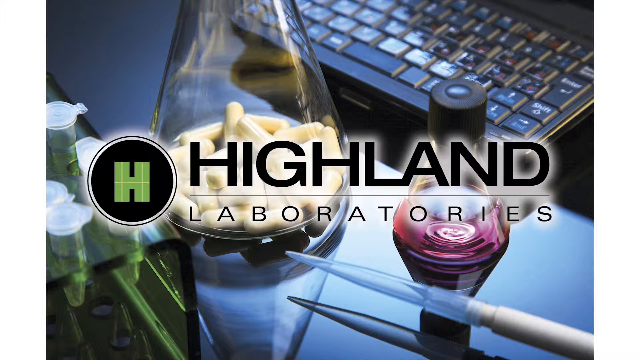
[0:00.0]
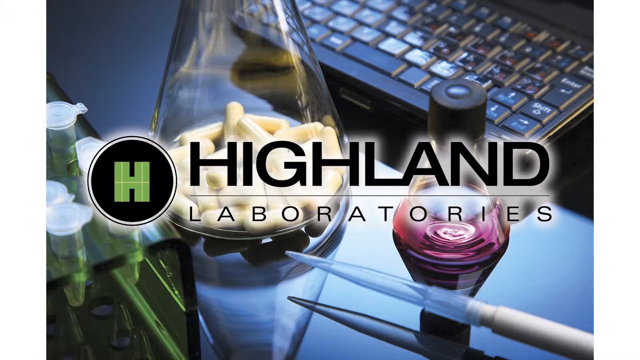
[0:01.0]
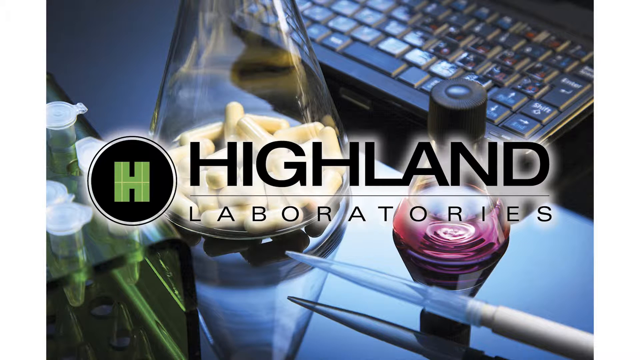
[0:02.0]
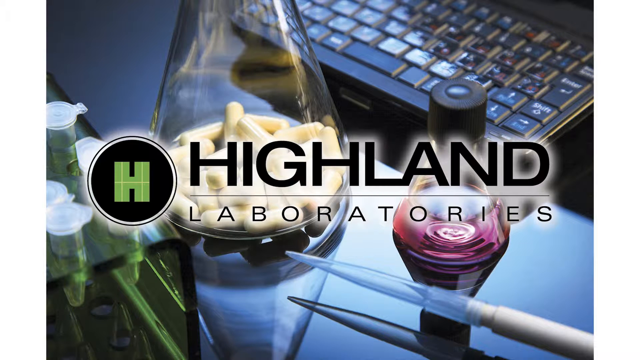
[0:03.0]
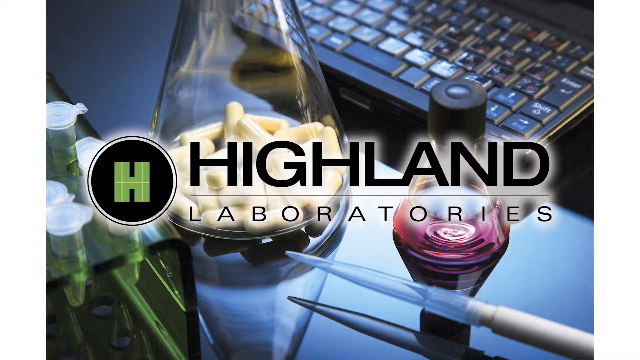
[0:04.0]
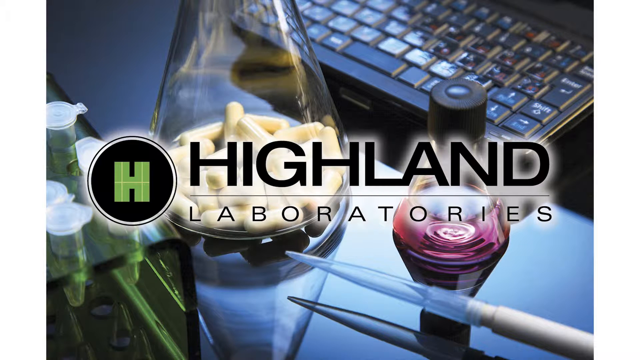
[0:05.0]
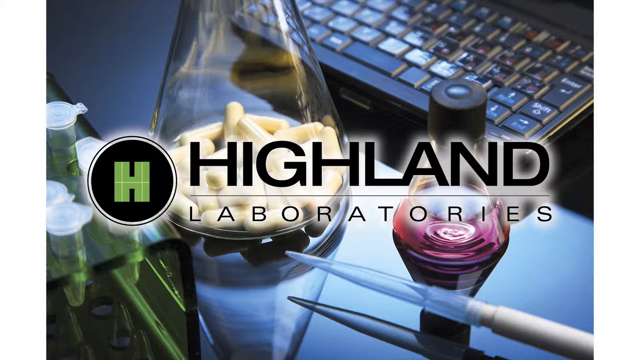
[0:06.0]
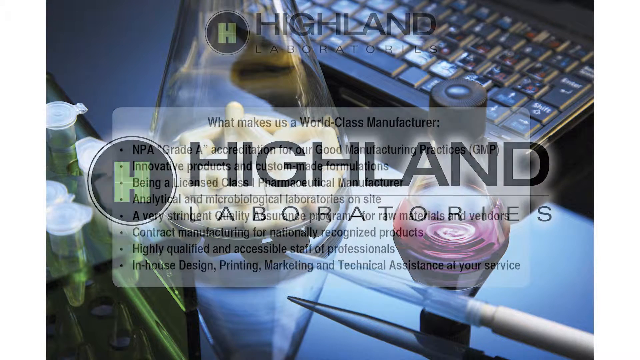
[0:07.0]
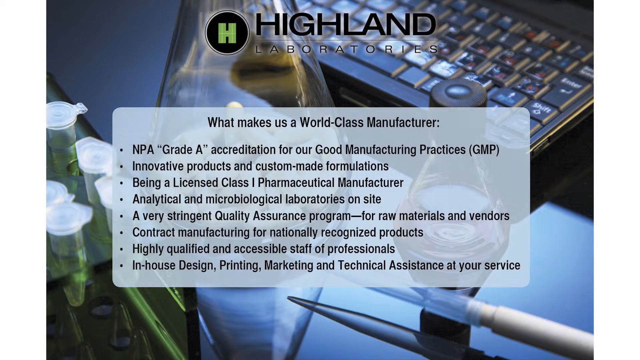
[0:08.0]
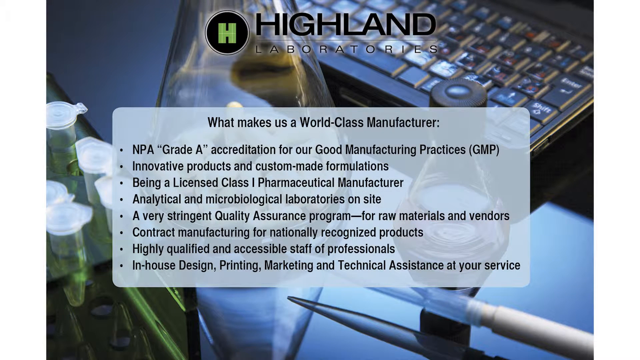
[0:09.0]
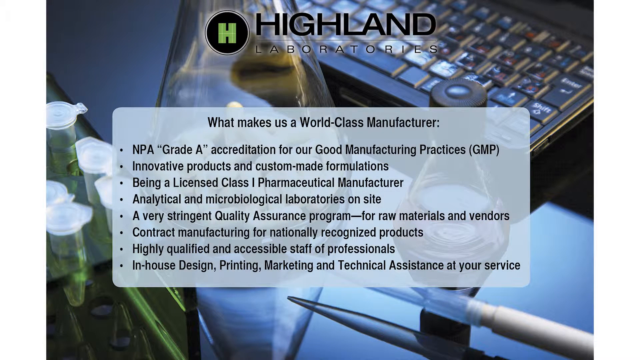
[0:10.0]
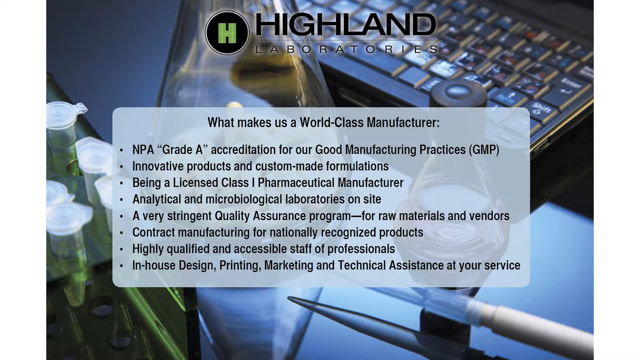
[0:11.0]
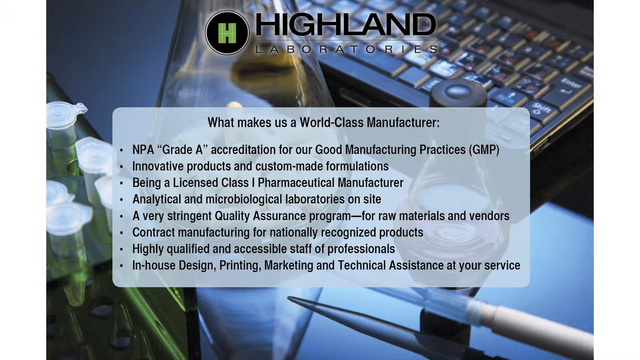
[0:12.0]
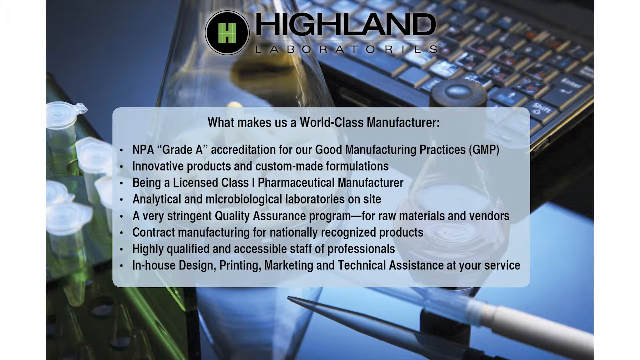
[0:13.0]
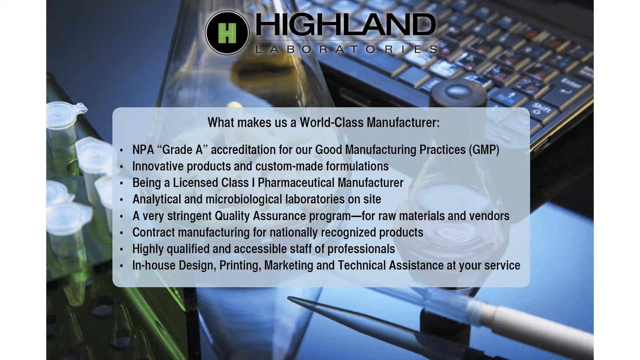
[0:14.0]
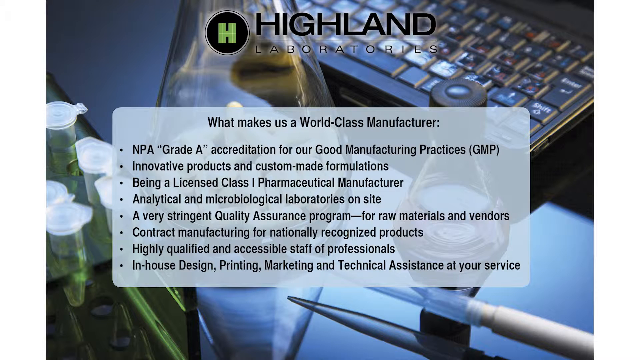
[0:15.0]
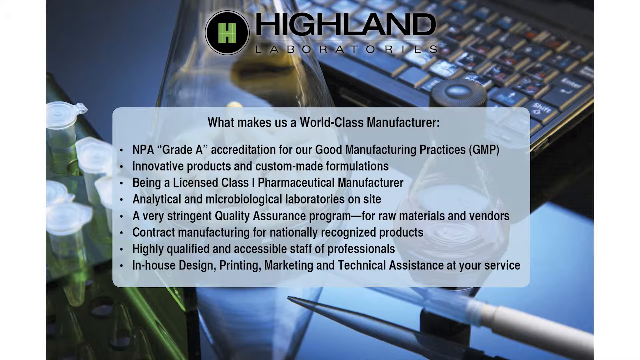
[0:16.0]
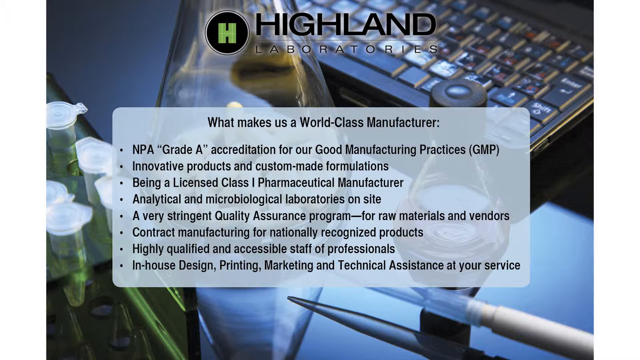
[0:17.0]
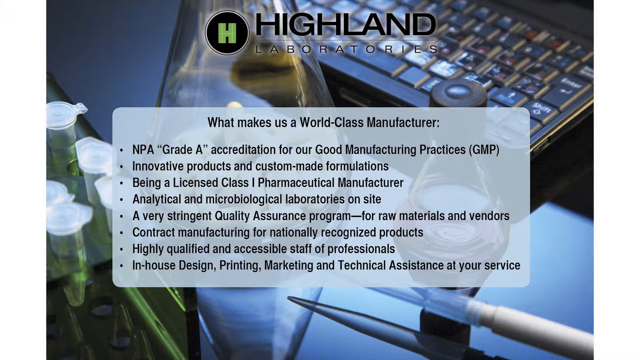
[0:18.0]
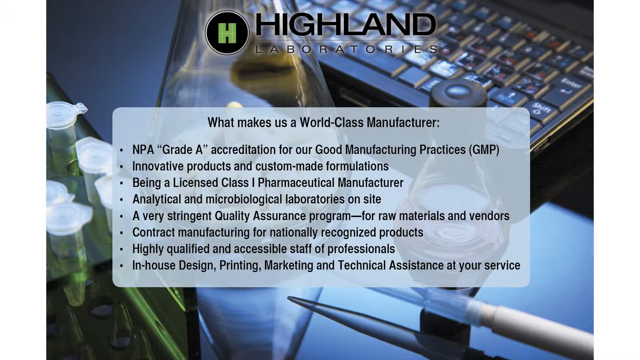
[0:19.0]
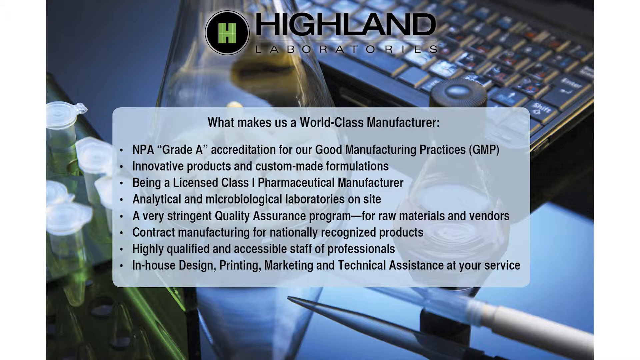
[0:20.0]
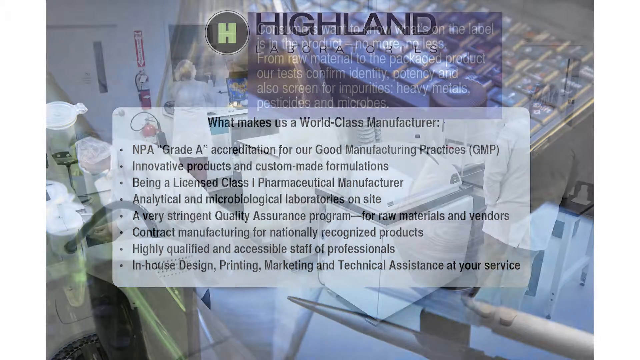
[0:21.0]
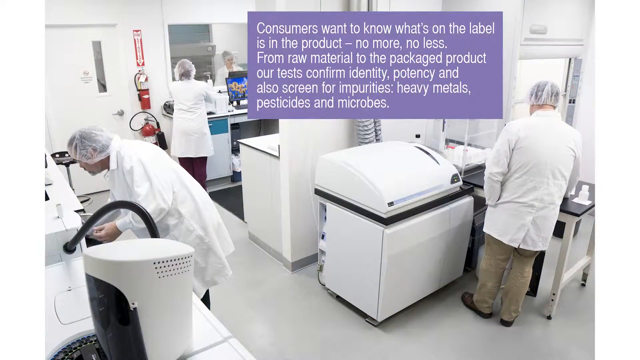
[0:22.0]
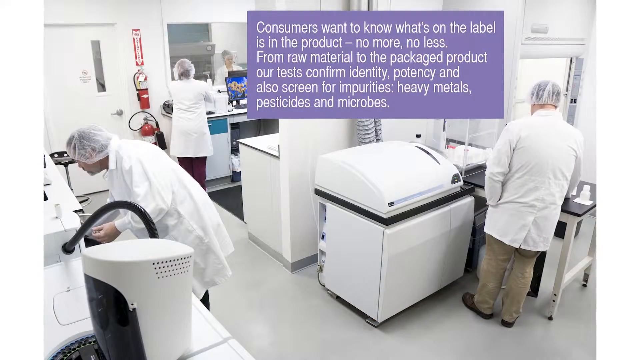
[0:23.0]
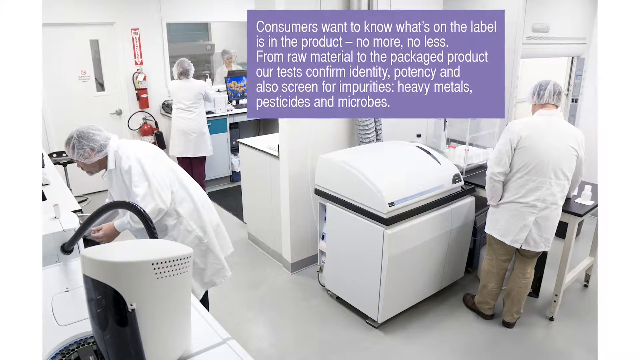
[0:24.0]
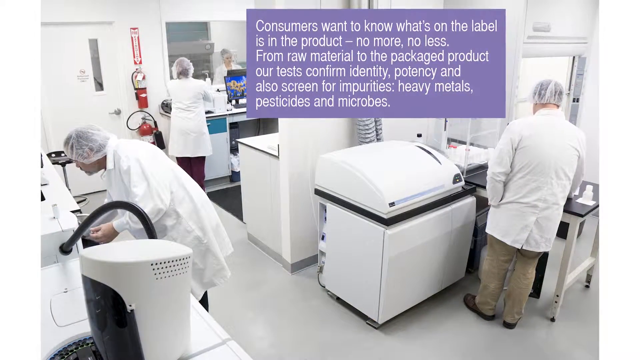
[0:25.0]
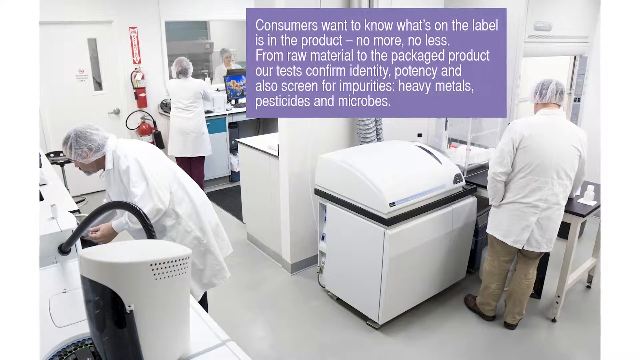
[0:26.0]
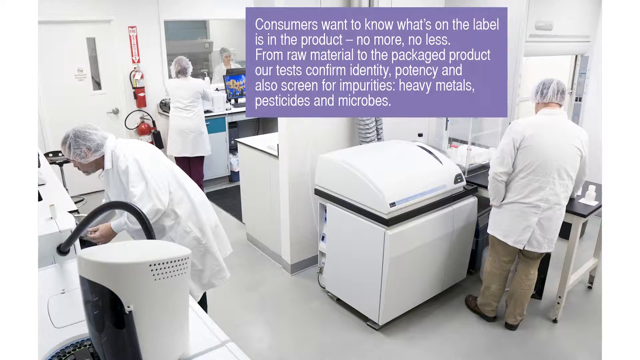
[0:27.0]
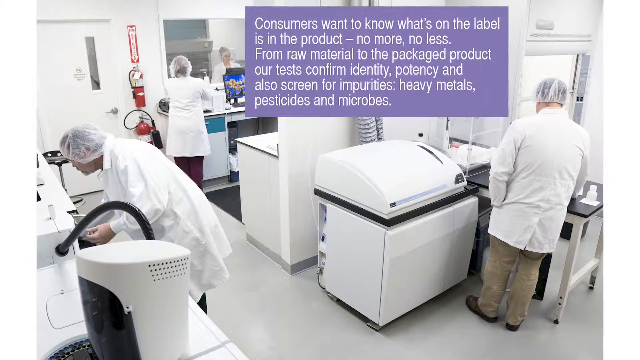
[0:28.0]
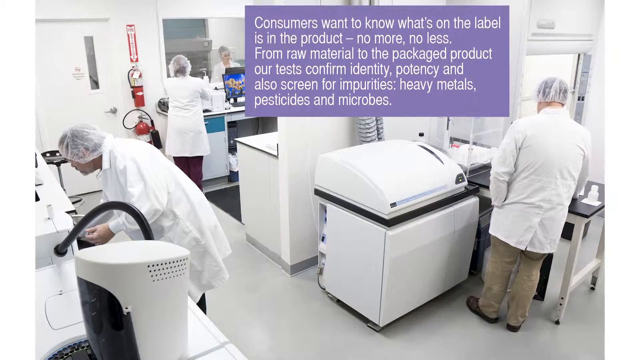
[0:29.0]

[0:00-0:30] The video opens with the word "Highland" with a horizontal line under it, followed by "Laboratories." The Highland Laboratories name appears to be on someone's desk, with a keyboard visible in the background. A box then pops up on the screen reading "What makes us a world-class manufacturer?" with about seven bullet points stating the case for the company being a world-class manufacturer. After the box lingers for probably about 20 seconds, the image changes to a photo inside some type of lab. The room looks very sterile and very white. People in lab coats and white hairnets are mostly hunched over equipment, which is very white and boxy. On the far wall there is a door, with a fire extinguisher mounted on the wall next to it. What appears to be the back of a woman is visible, standing in front of a pane of see-through glass.